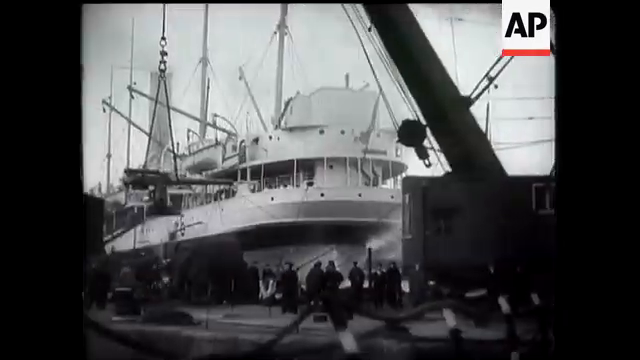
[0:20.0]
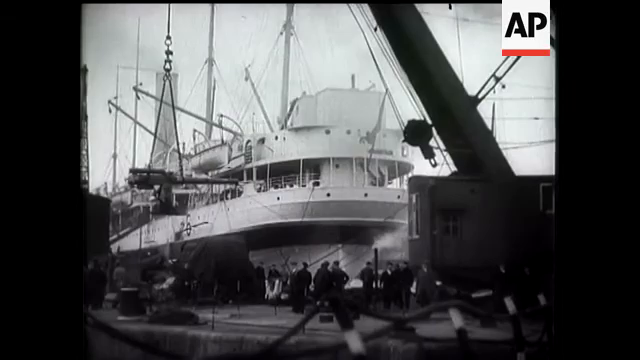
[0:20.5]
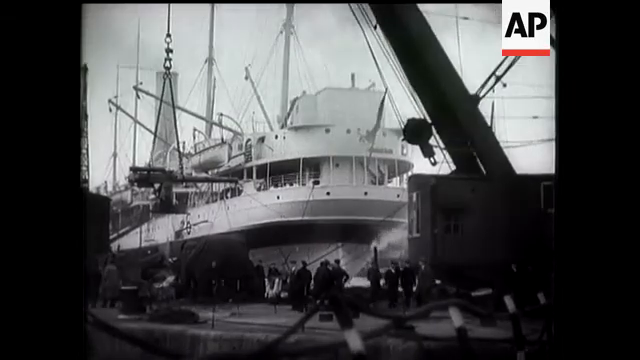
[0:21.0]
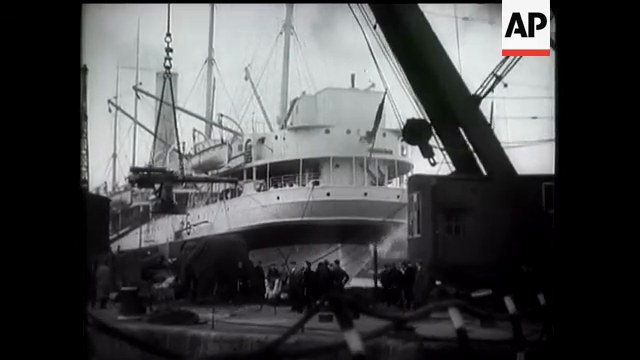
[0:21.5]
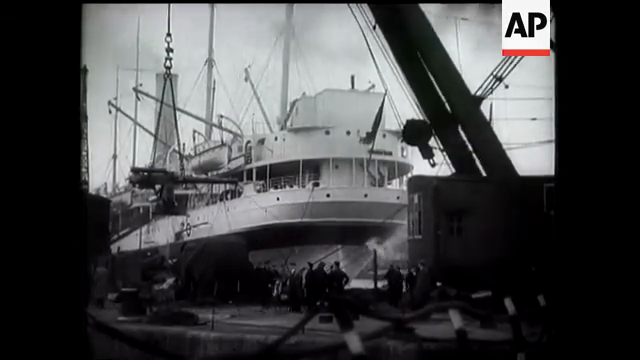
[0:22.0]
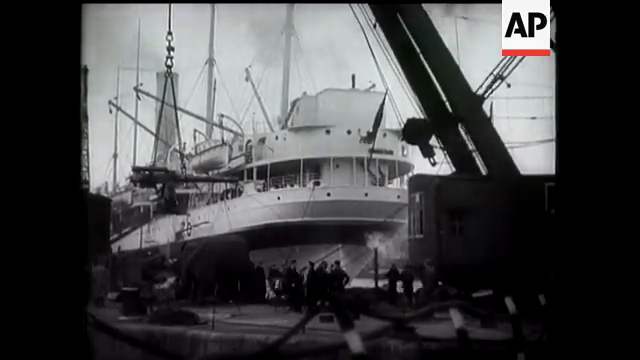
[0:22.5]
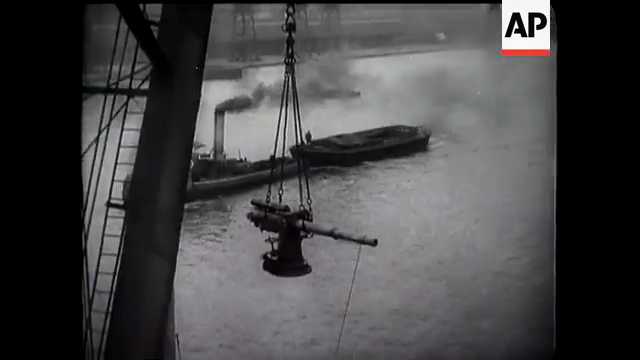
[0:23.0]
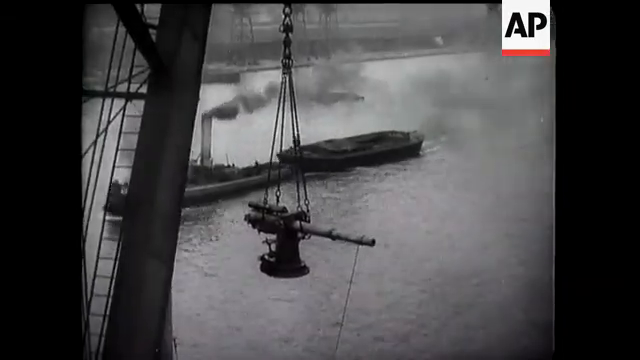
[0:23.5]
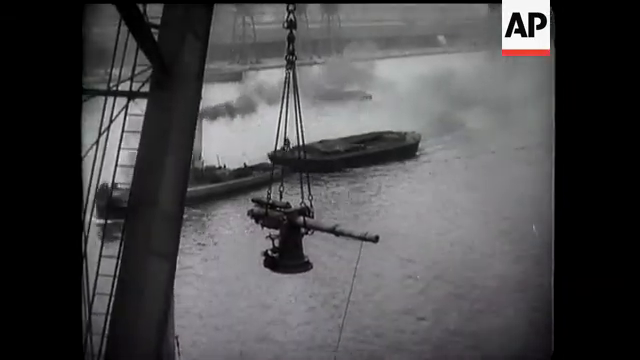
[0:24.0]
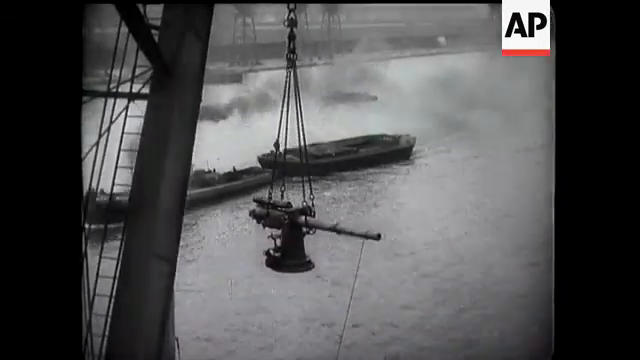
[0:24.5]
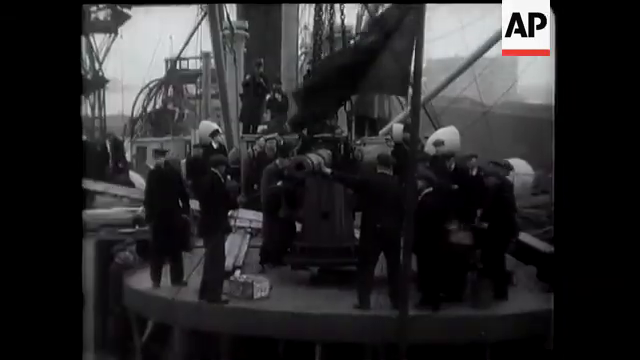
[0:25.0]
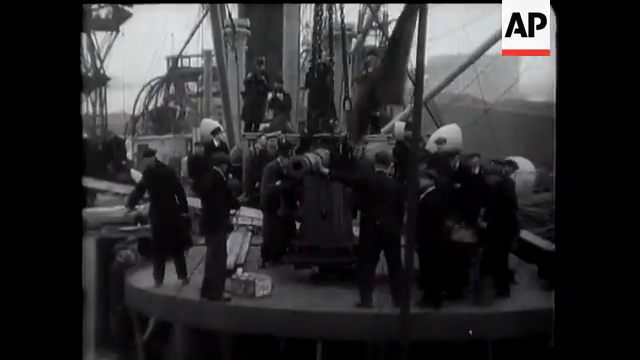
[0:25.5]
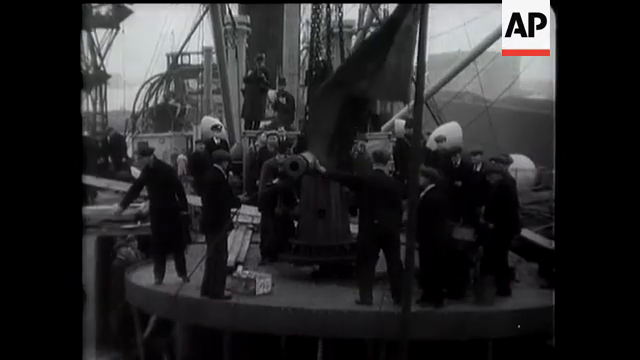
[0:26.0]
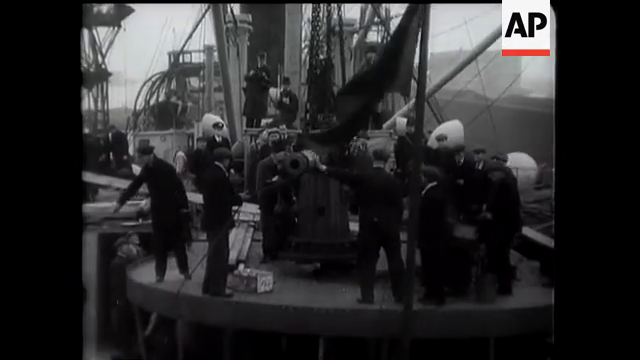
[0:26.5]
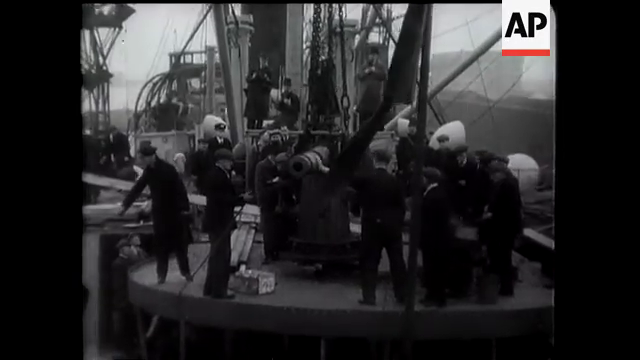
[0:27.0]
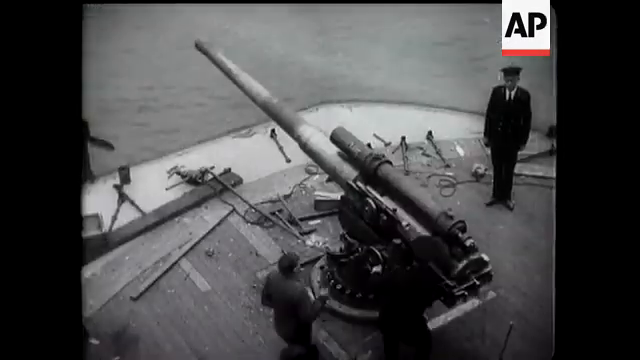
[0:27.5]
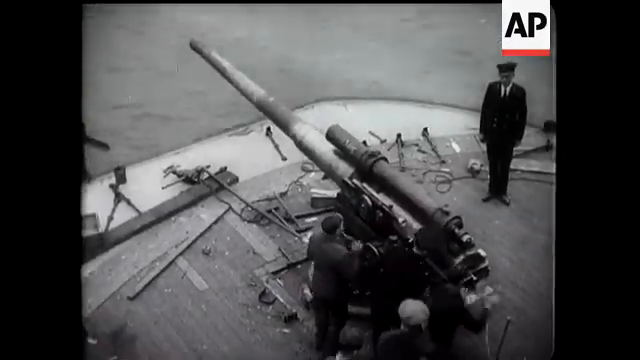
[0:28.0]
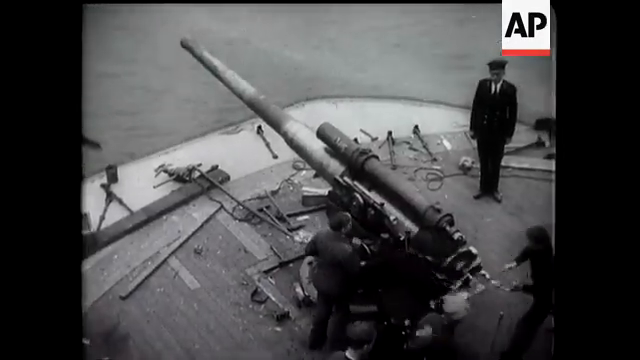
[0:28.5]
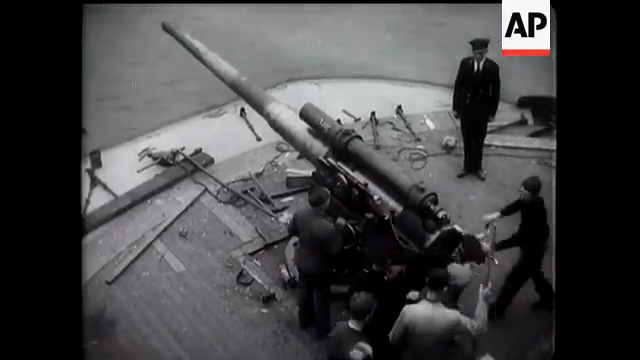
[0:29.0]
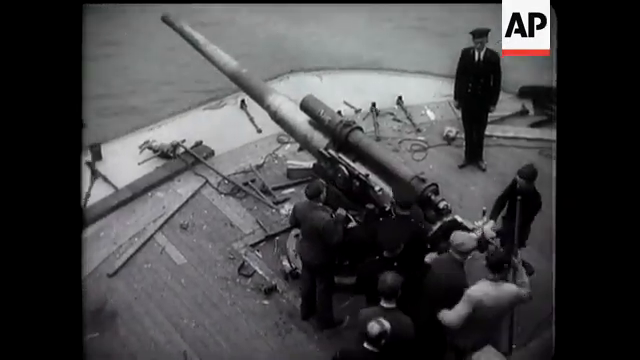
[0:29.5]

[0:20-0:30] People lift up what appears to be a cannon. A light-colored, seemingly white ship is visible, followed by other ships, one of which has a chimney-like structure next to it. Soldiers assemble, and toward the end they get behind the cannon, which points toward the left side of the screen.